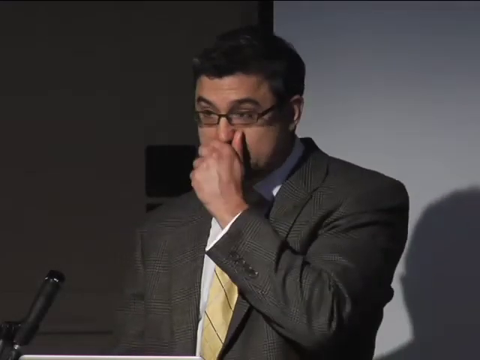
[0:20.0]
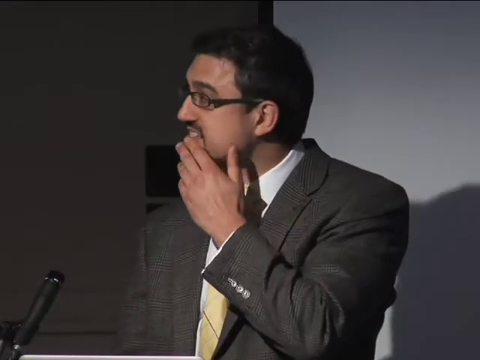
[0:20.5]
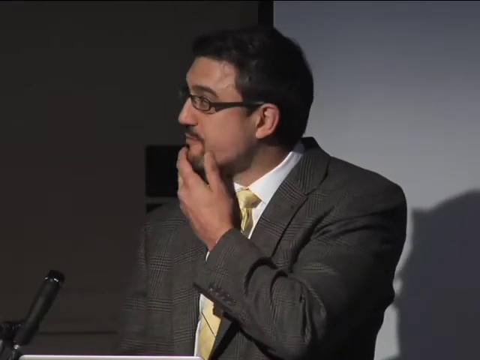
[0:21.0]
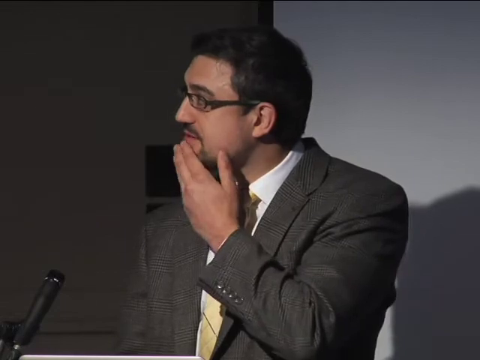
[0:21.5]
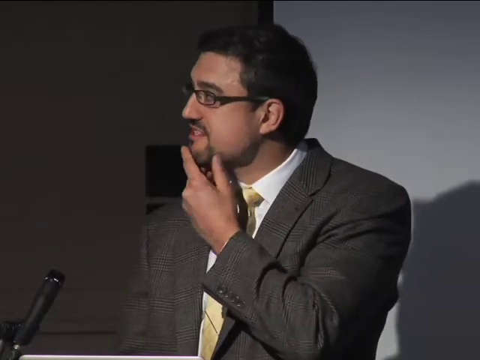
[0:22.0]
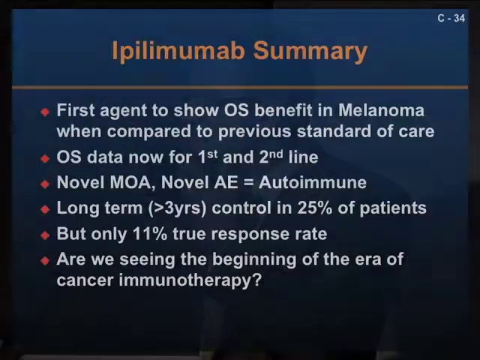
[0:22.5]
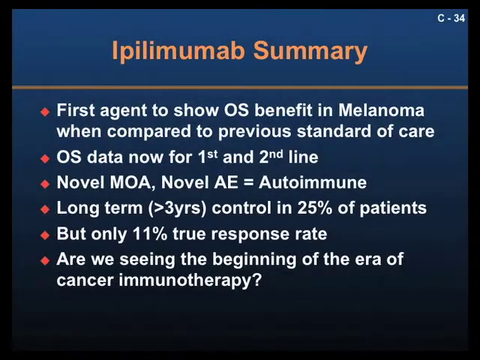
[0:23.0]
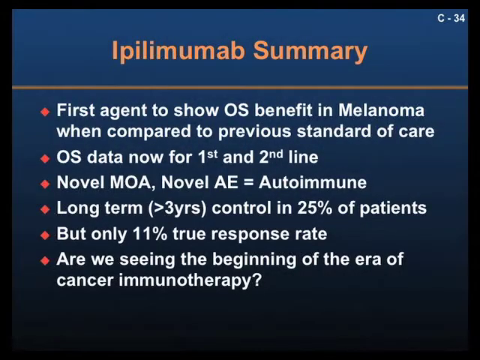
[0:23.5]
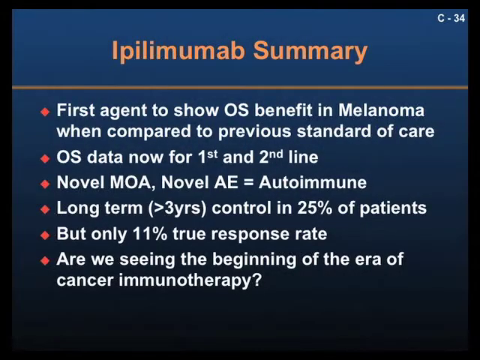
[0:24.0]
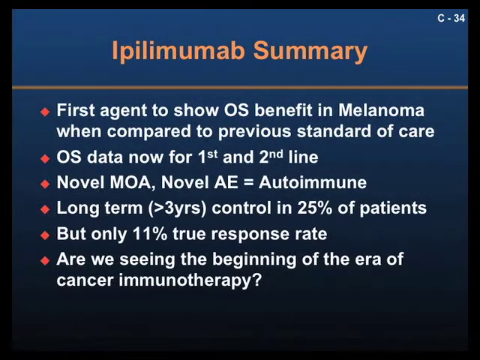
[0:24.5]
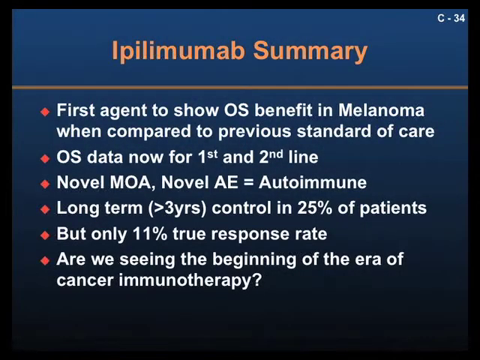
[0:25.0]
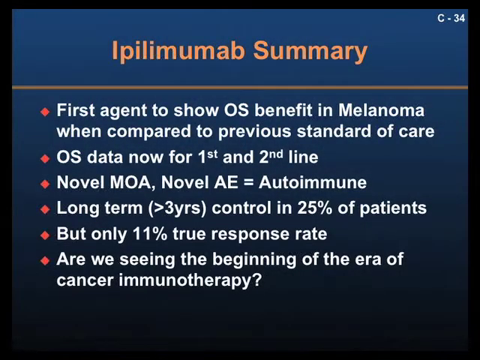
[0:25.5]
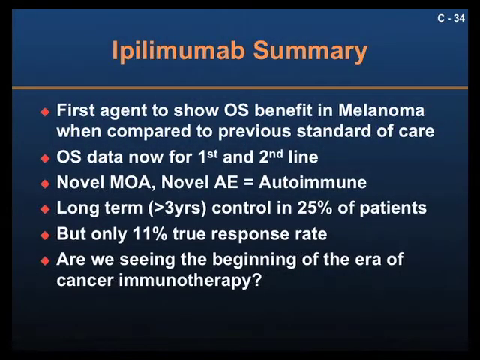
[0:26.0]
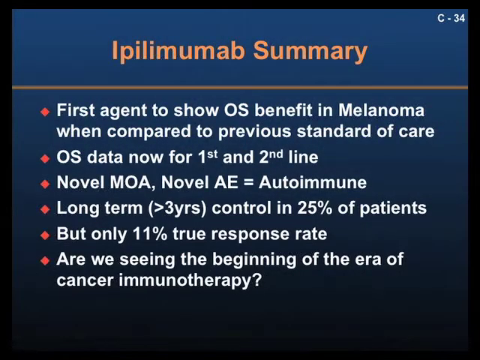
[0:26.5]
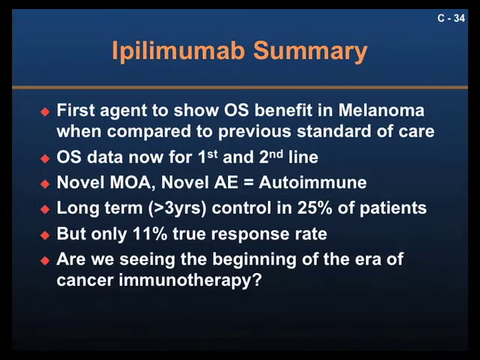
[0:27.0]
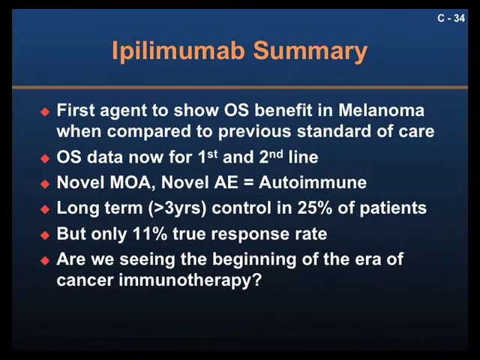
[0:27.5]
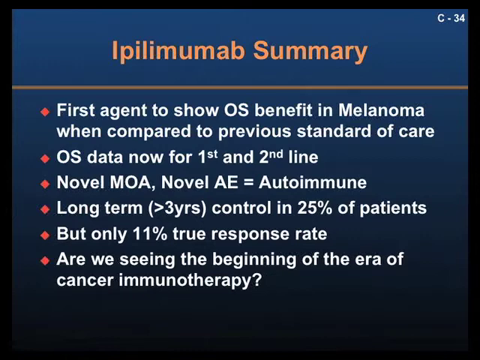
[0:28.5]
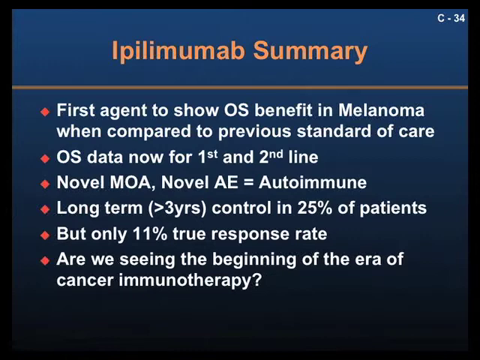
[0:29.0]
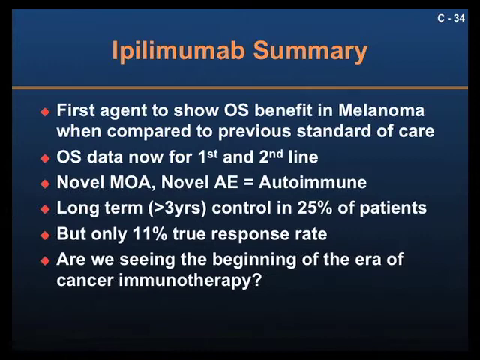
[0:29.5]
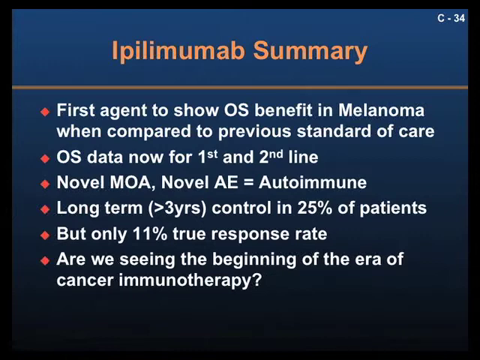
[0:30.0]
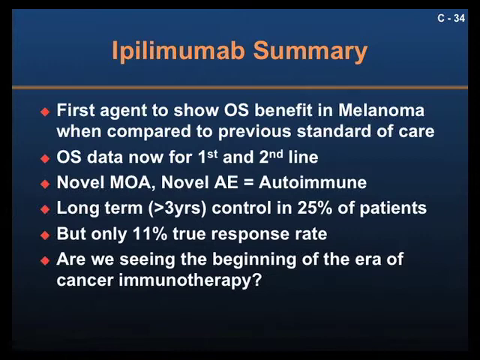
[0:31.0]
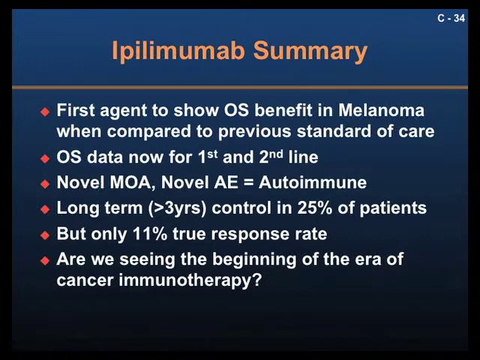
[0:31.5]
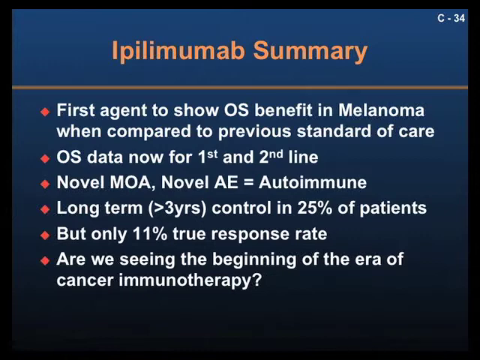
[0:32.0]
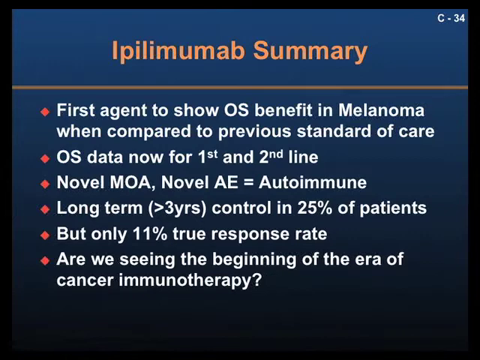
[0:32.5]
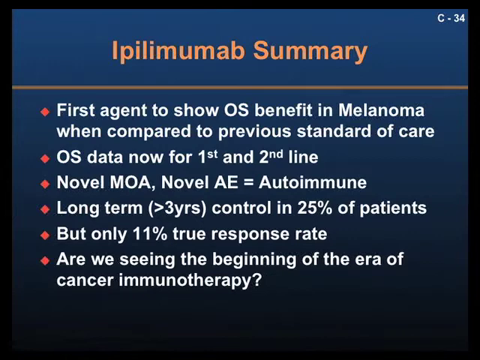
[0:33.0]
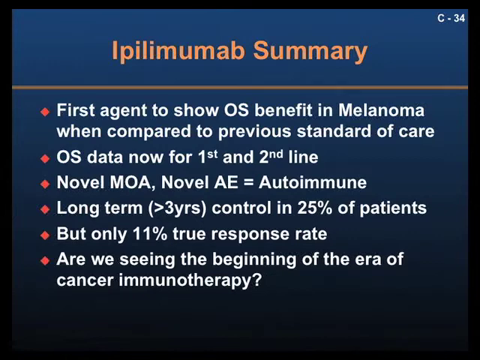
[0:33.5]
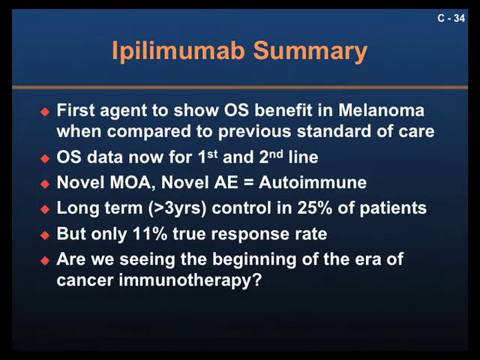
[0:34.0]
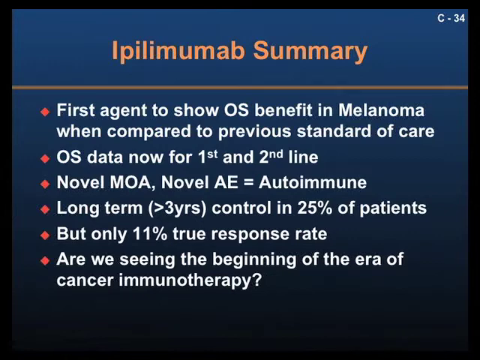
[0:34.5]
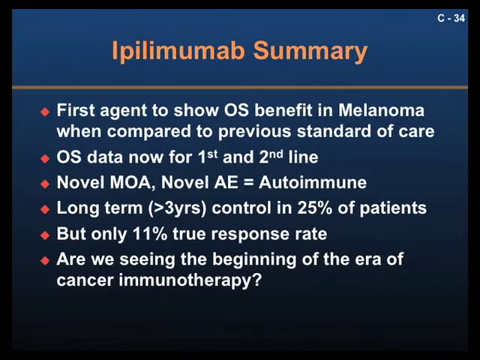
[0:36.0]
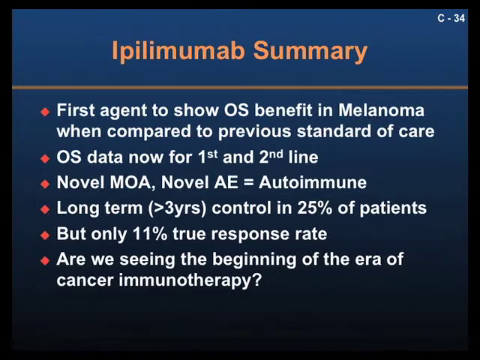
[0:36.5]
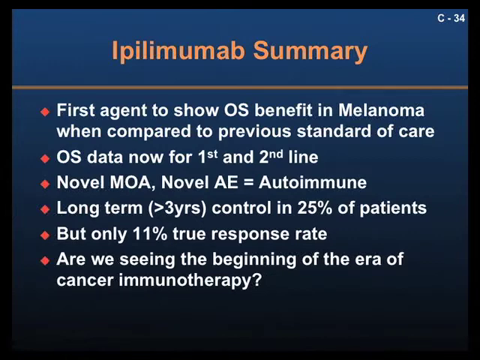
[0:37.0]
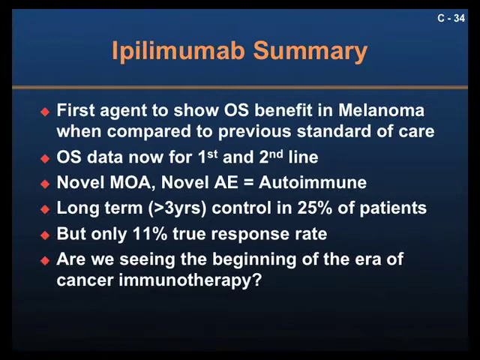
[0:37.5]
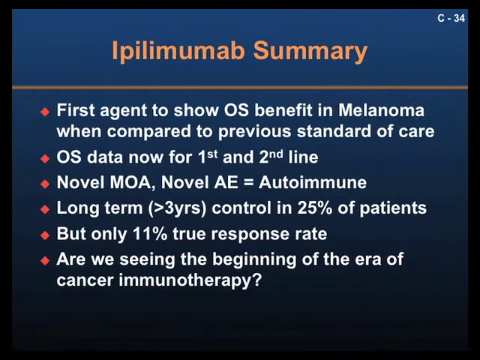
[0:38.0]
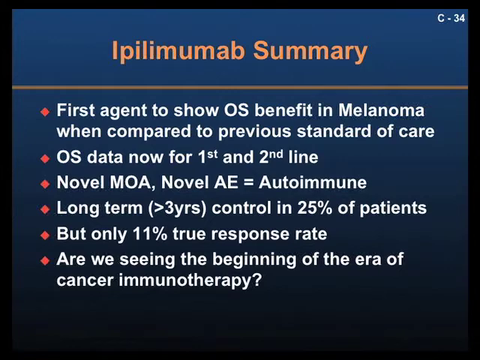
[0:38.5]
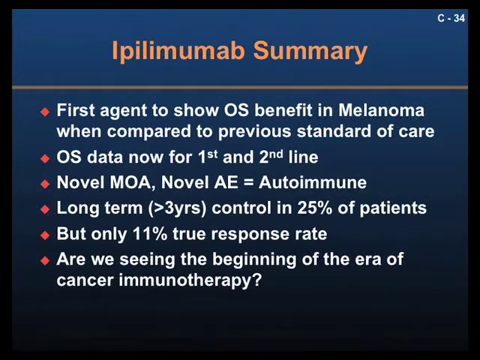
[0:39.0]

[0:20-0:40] The doctor giving the talk stands behind the podium on the stage at the symposium. He has reached up with his left hand and grabbed hold of his nose, perhaps out of nervousness or an itchy nose. He slides the same hand downward over his face and begins rubbing his chin and goatee beard between his left thumb and forefinger, while the rest of the fingers of his left hand rub his lower right jawline. As he does this, he looks toward the right, probably at the screen showing his slide. He seems rather nervous, and the rubbing of his chin and face looks like a soothing gesture.